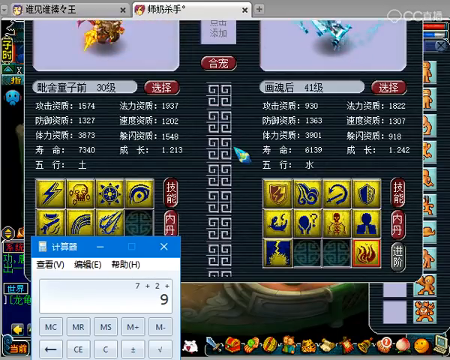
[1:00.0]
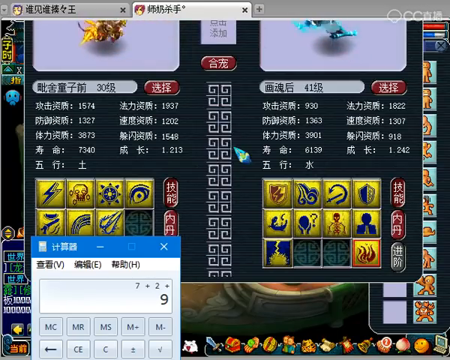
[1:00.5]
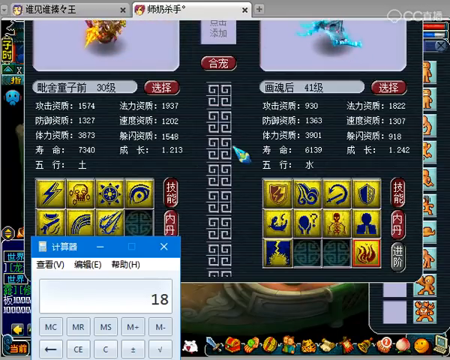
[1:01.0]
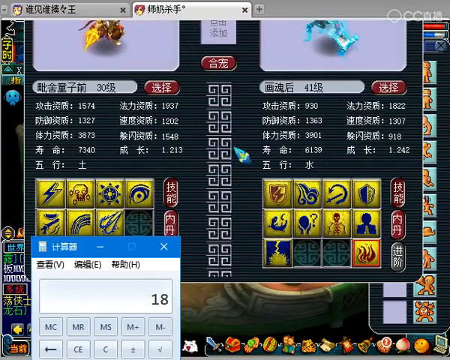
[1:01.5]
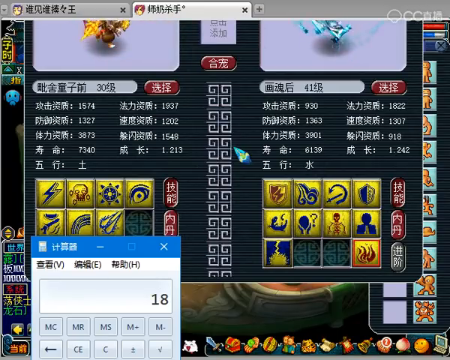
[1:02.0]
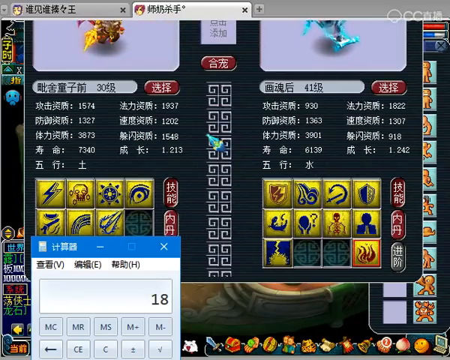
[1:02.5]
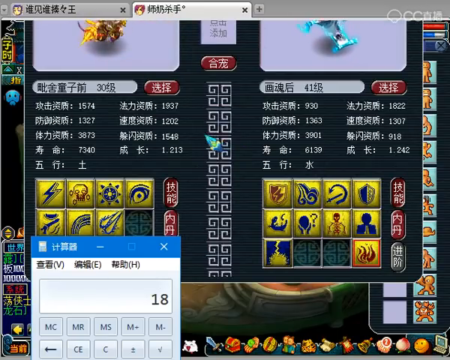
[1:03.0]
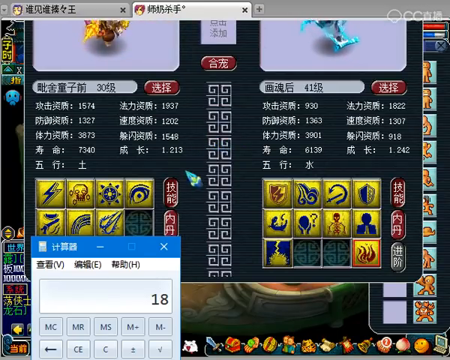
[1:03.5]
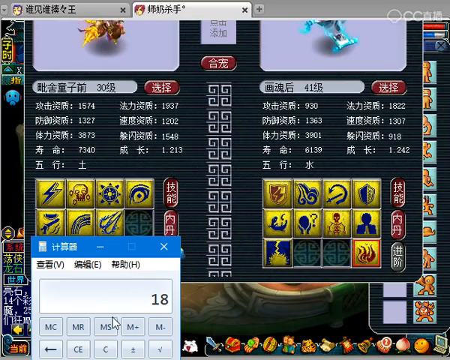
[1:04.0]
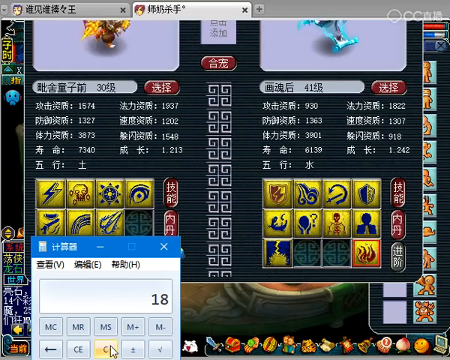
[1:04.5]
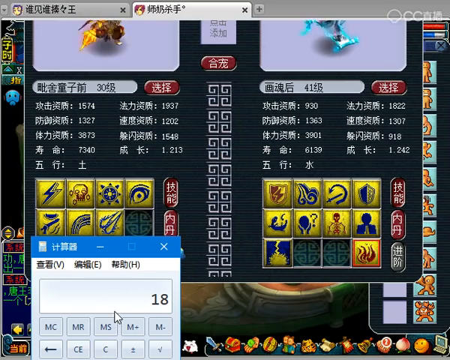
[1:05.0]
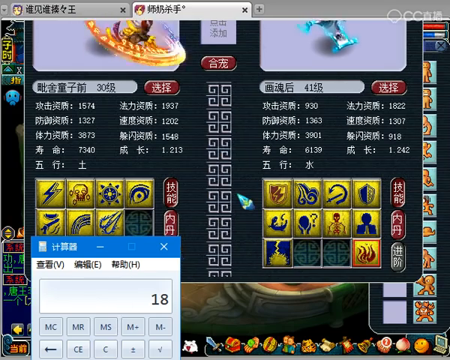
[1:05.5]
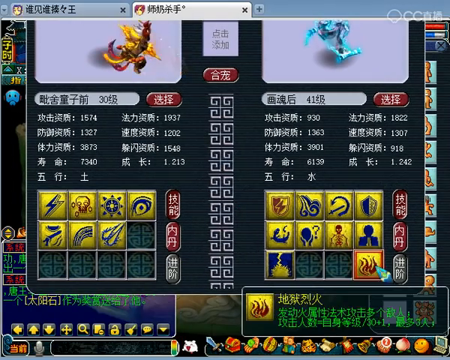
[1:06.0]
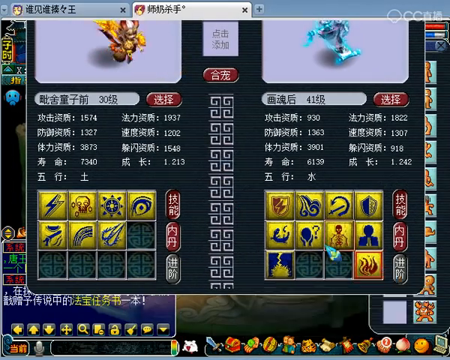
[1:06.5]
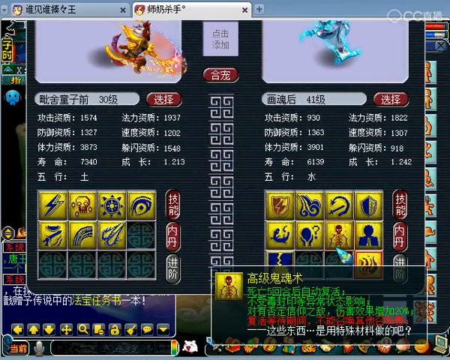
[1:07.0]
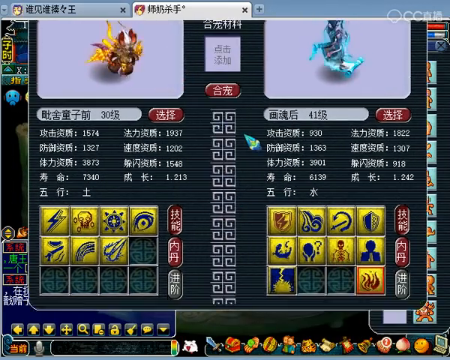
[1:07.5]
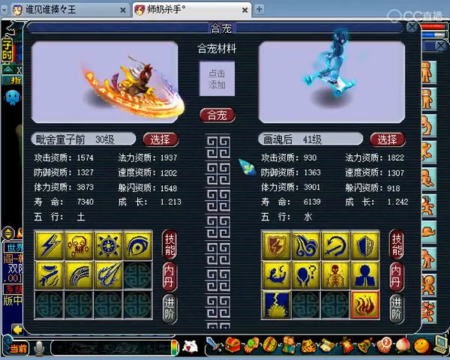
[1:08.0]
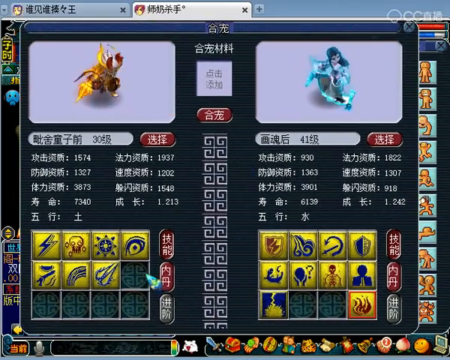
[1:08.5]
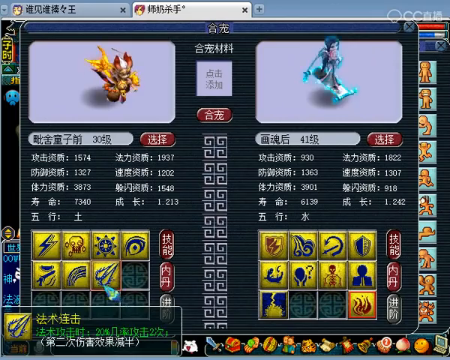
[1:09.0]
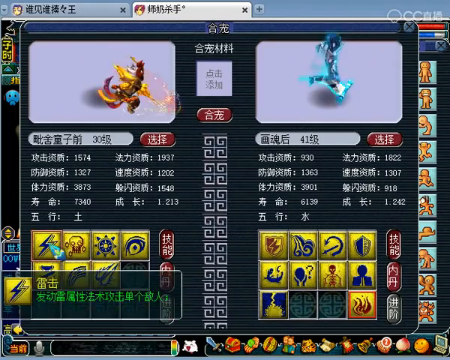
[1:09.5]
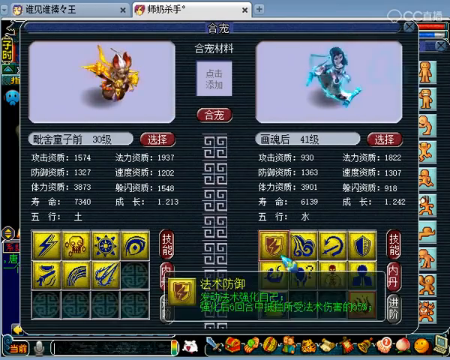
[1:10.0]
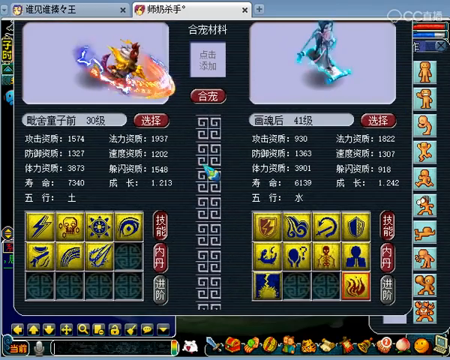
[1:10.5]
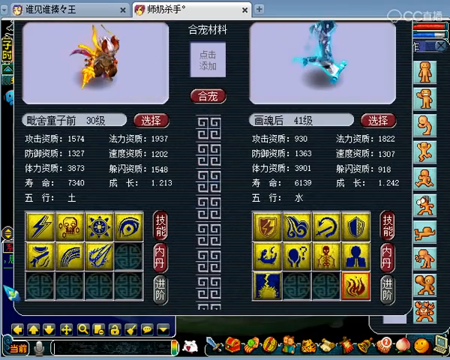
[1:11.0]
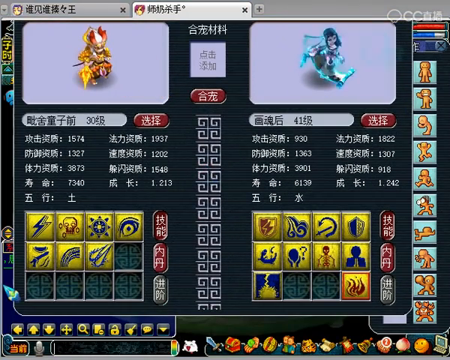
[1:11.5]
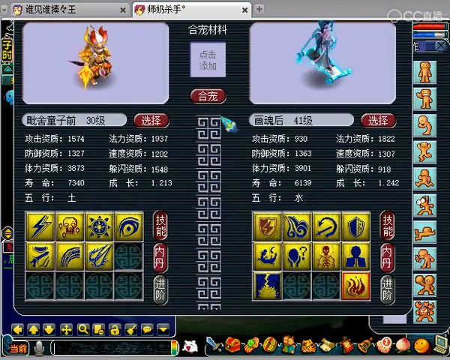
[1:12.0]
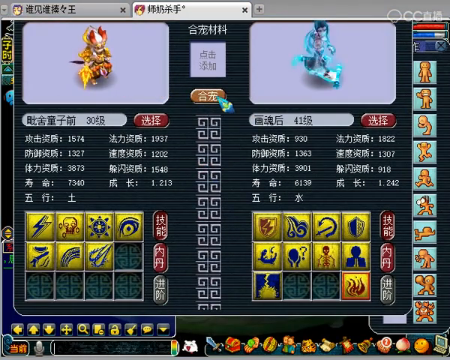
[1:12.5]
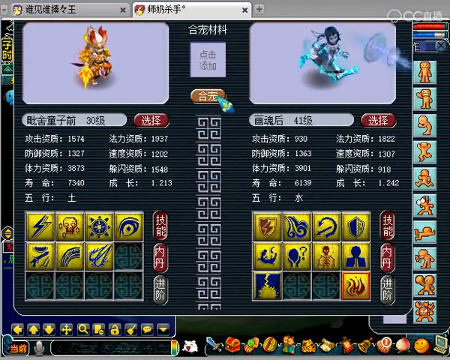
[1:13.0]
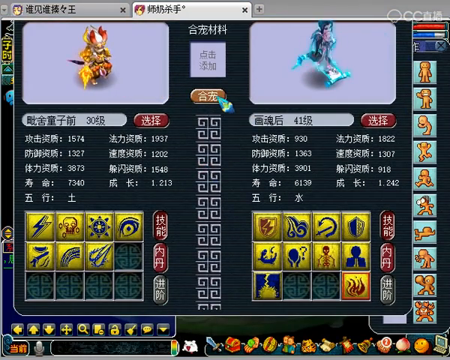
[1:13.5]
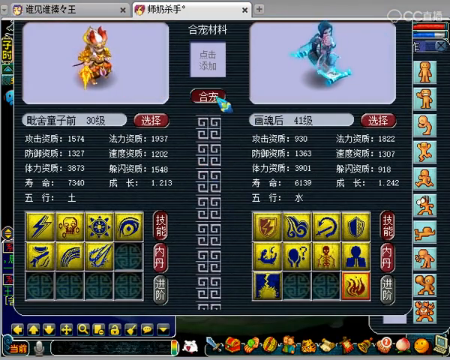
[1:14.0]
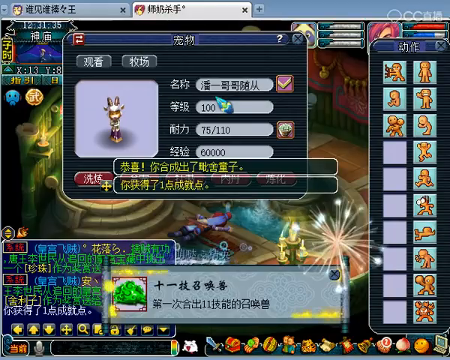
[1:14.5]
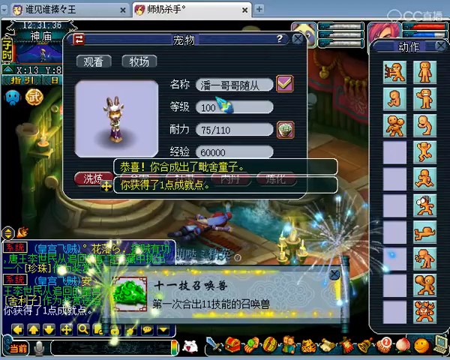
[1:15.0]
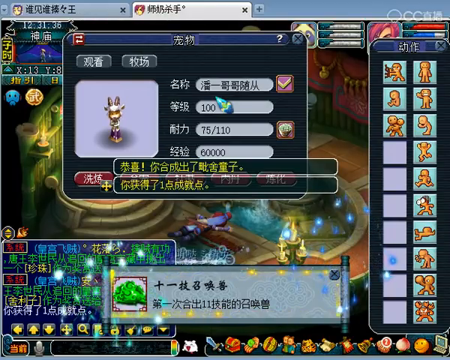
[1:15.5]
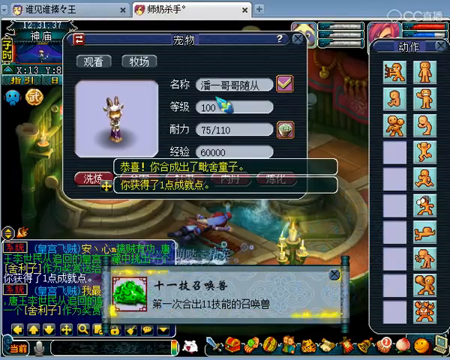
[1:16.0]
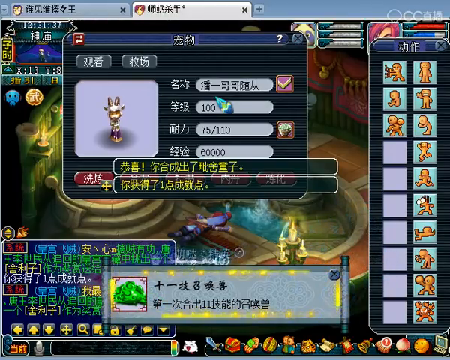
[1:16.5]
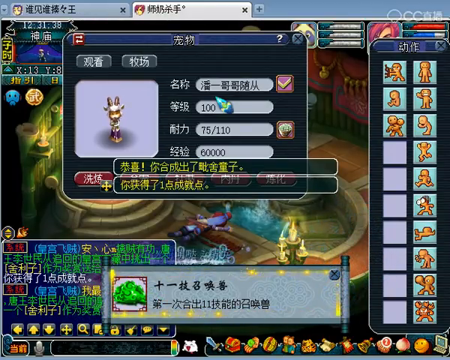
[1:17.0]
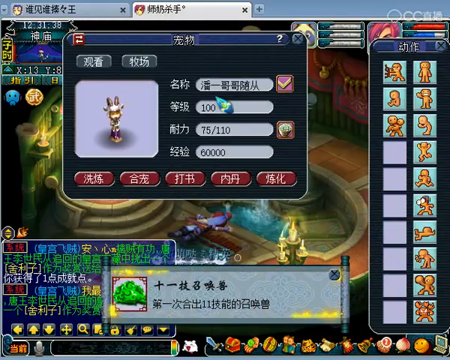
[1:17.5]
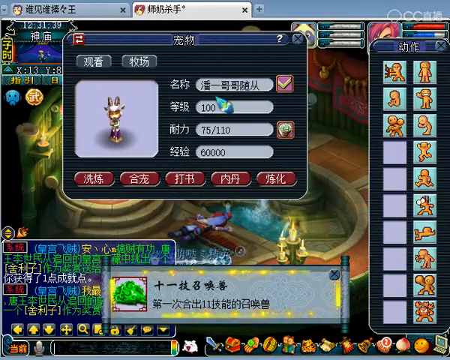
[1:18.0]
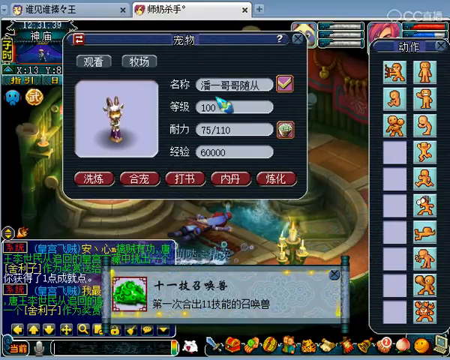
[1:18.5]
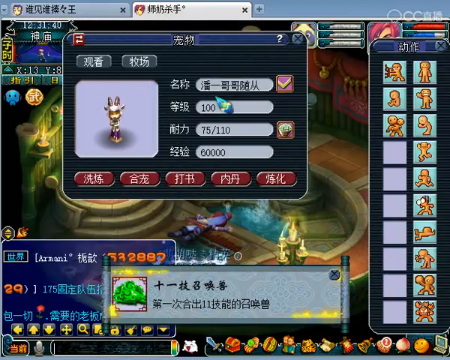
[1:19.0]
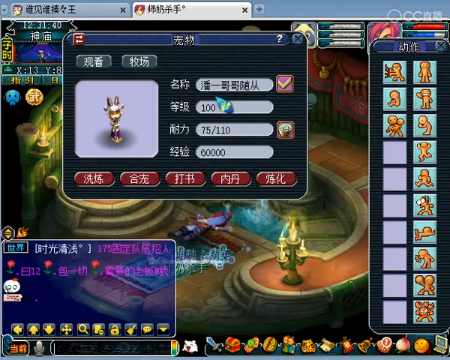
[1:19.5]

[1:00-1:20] More gameplay of the same game is shown; it looks like an MMO or MOBA type game, possibly an MMO given how many stats are on the screen. The player picks two of their characters, their monsters: a small character with a red helmet on the left, and a ghostly-looking girl on the right riding a scroll. She has blue flames around her, black hair and pale purplish skin. The player clicks a button in the middle between them and apparently is awarded something, seemingly green clouds or maybe an achievement, and a notification appears saying they got something.